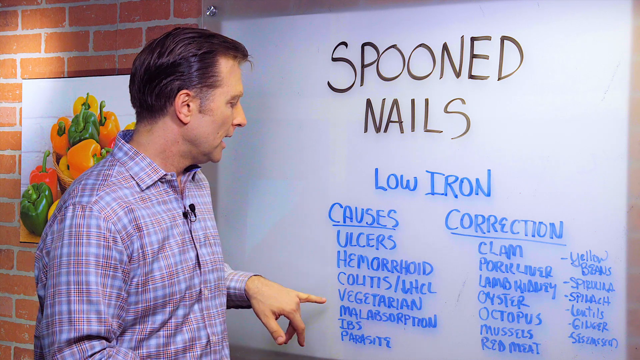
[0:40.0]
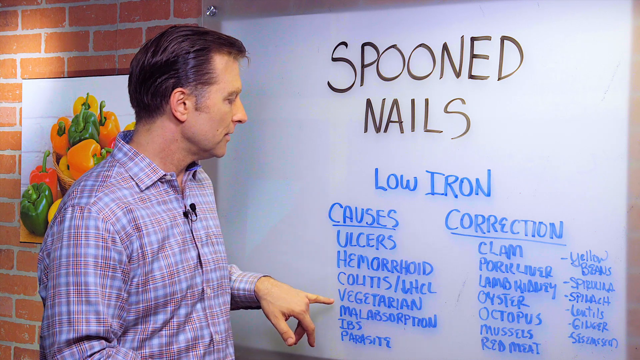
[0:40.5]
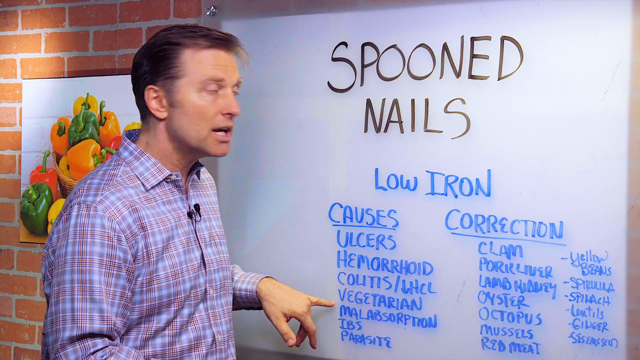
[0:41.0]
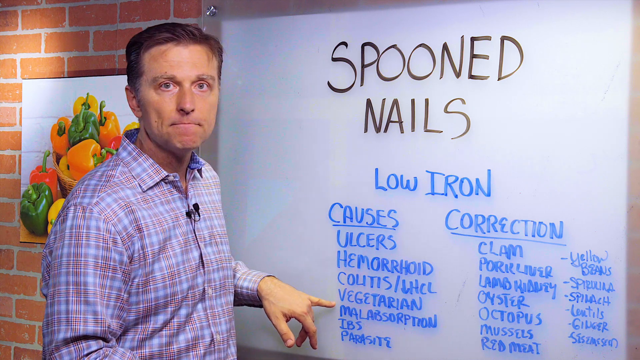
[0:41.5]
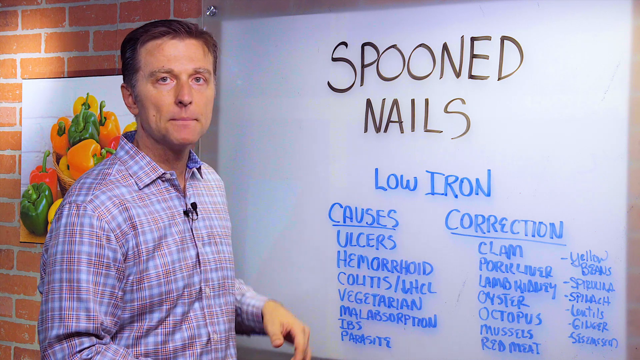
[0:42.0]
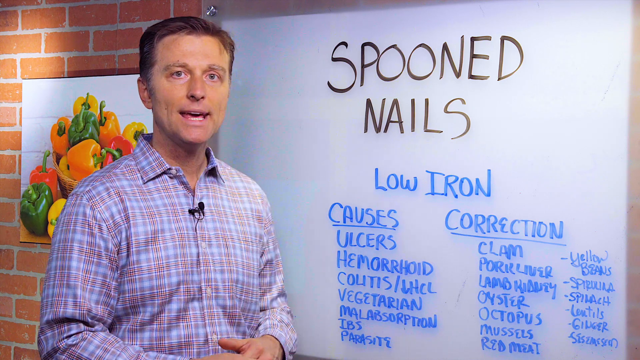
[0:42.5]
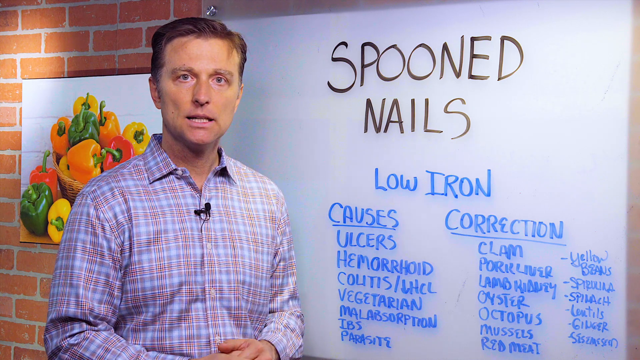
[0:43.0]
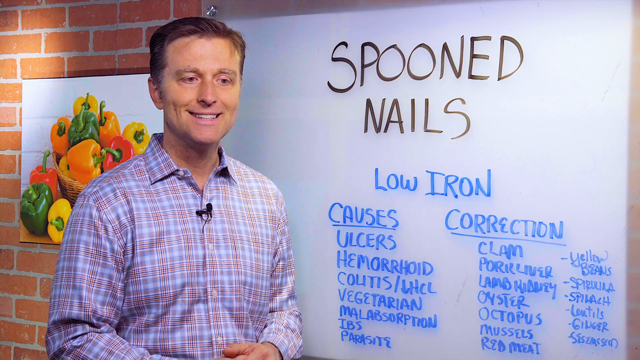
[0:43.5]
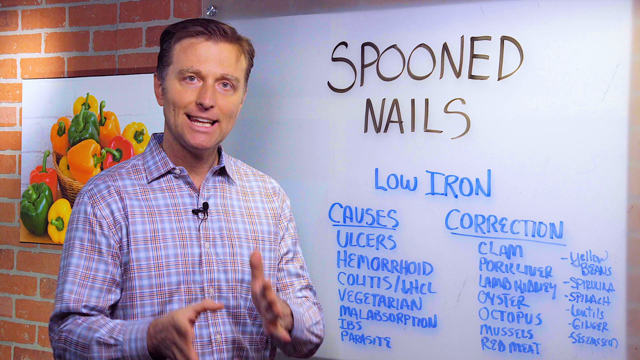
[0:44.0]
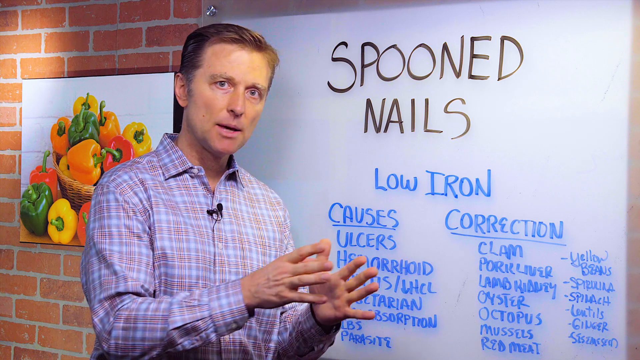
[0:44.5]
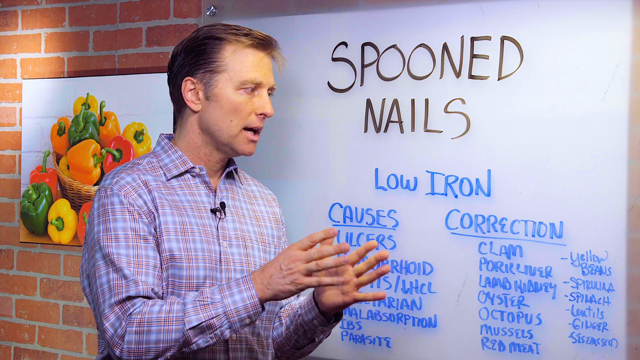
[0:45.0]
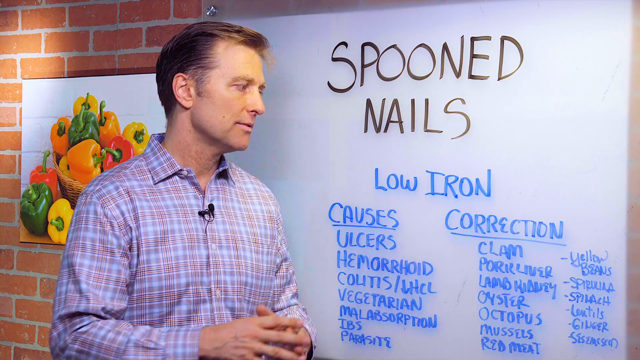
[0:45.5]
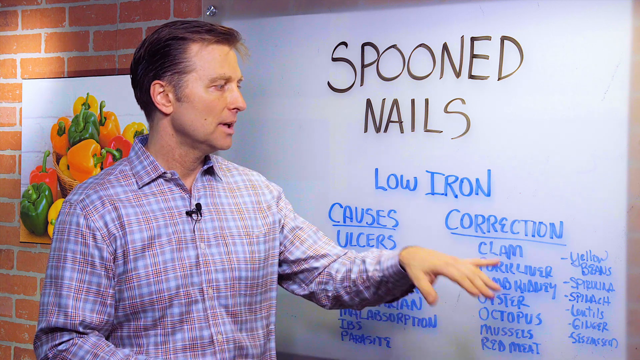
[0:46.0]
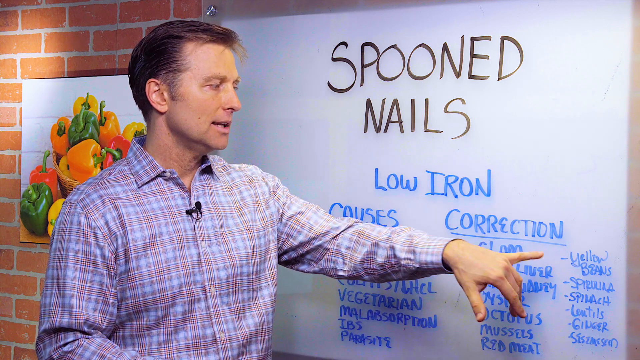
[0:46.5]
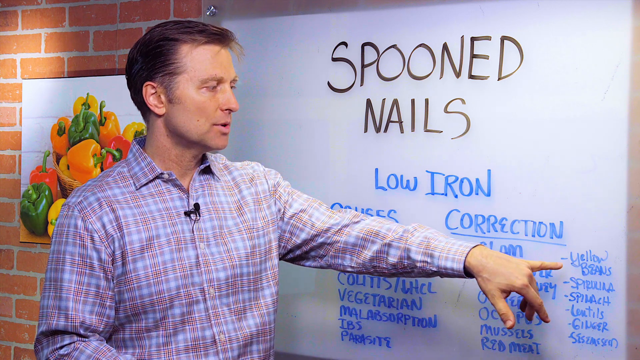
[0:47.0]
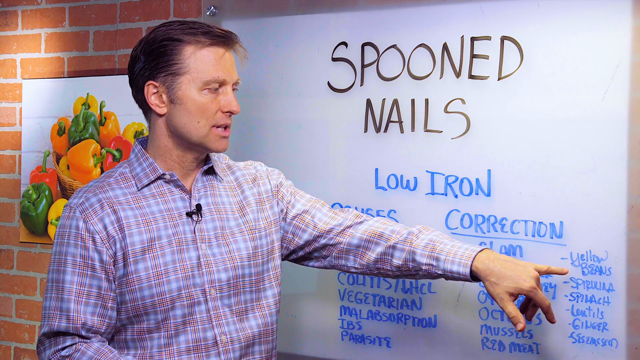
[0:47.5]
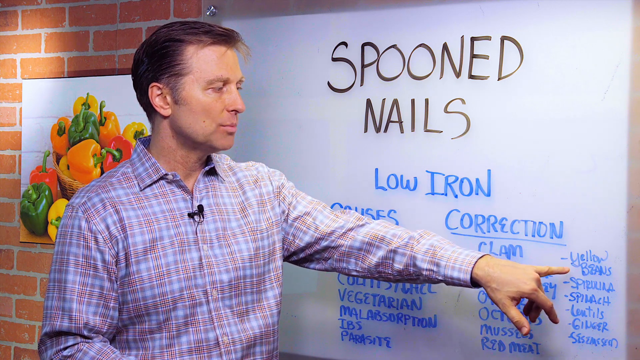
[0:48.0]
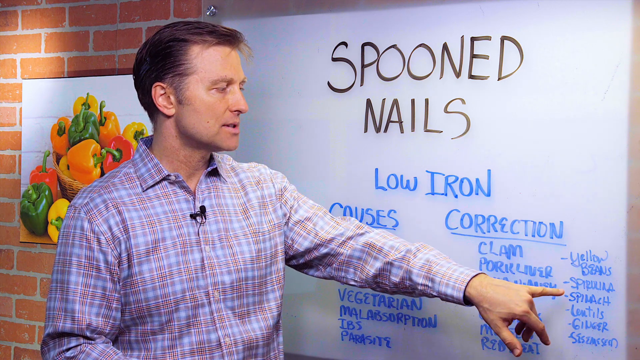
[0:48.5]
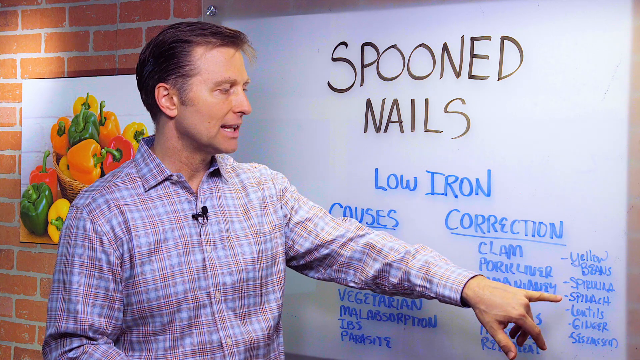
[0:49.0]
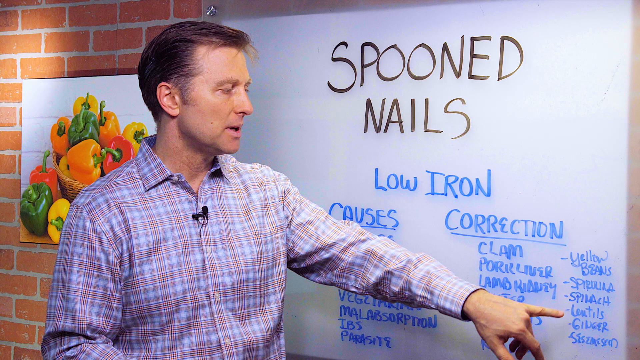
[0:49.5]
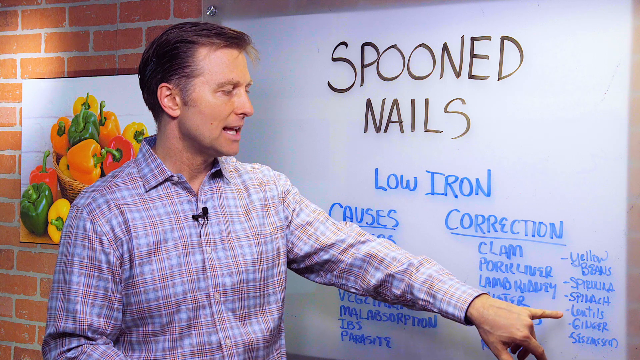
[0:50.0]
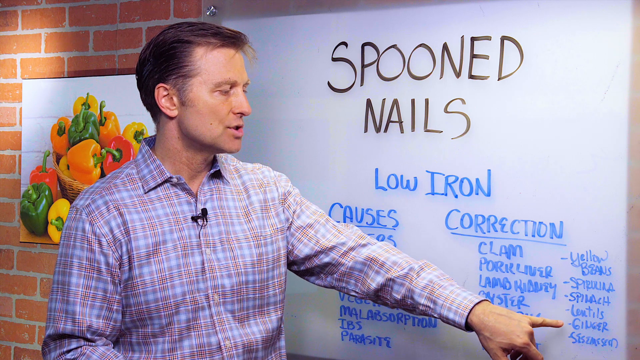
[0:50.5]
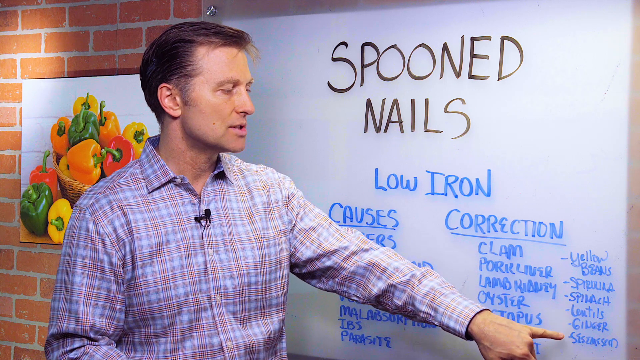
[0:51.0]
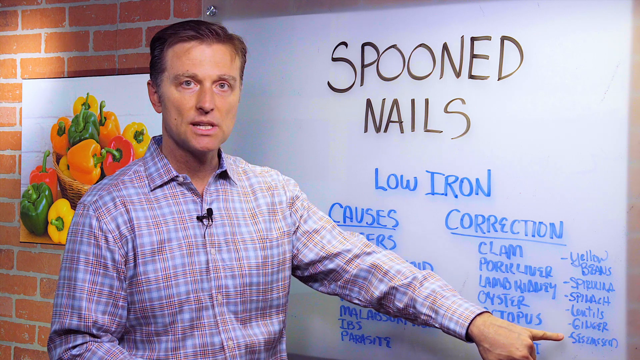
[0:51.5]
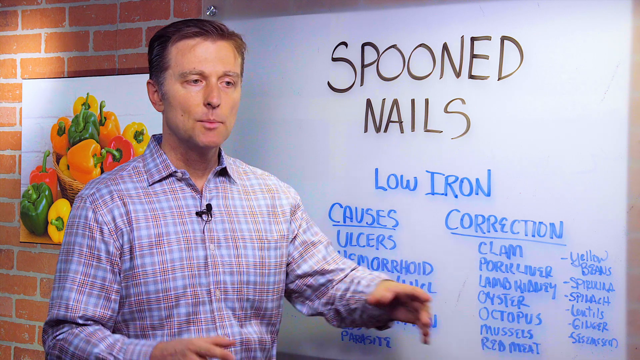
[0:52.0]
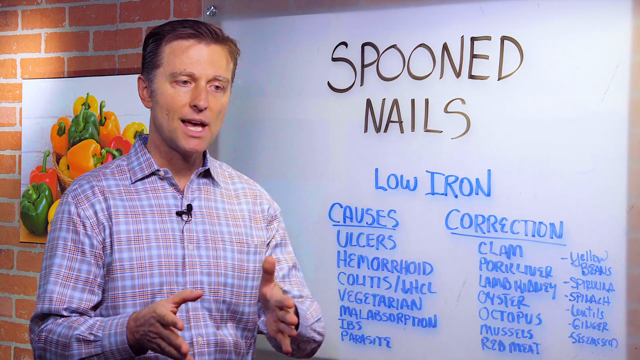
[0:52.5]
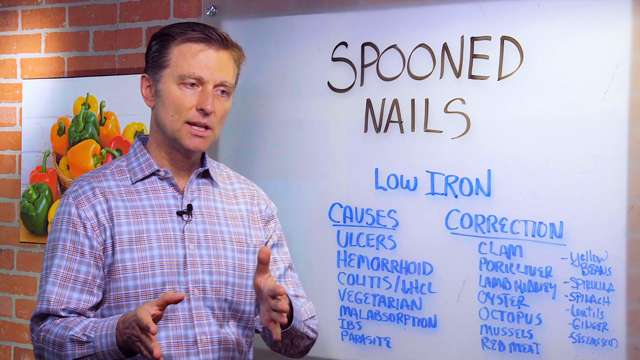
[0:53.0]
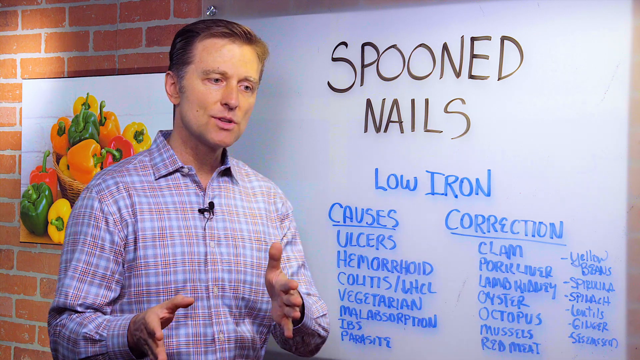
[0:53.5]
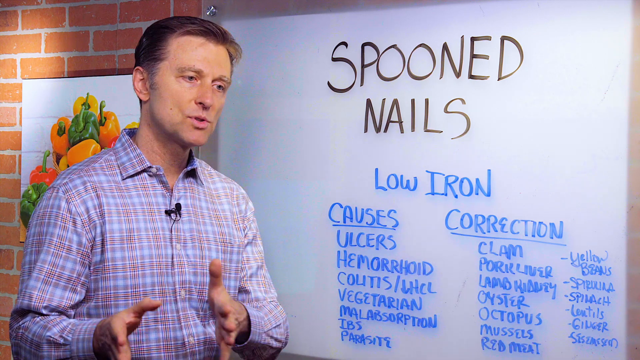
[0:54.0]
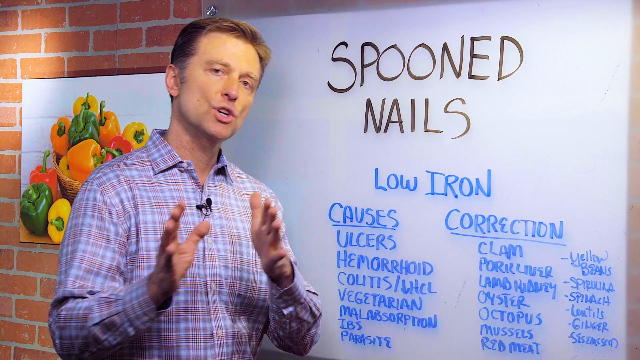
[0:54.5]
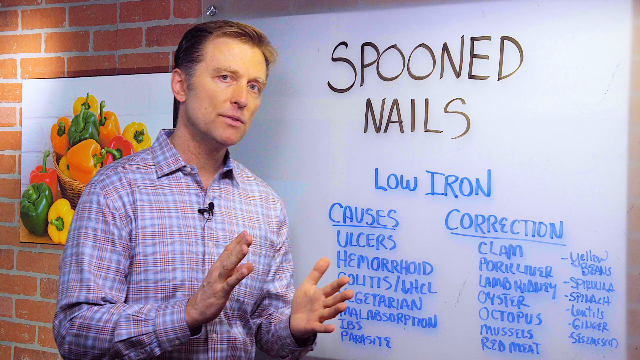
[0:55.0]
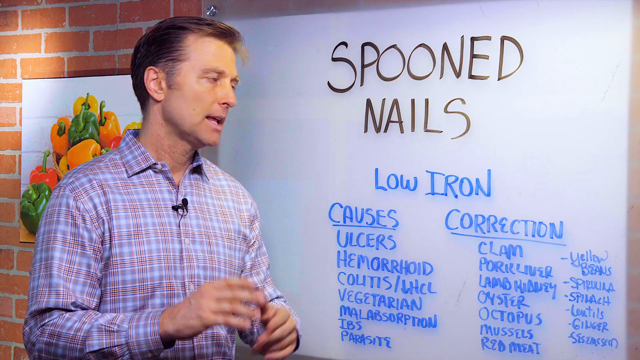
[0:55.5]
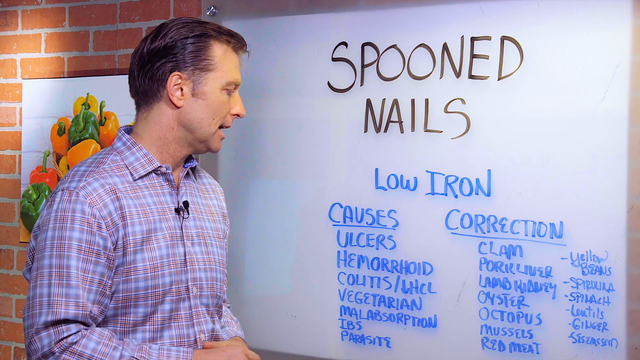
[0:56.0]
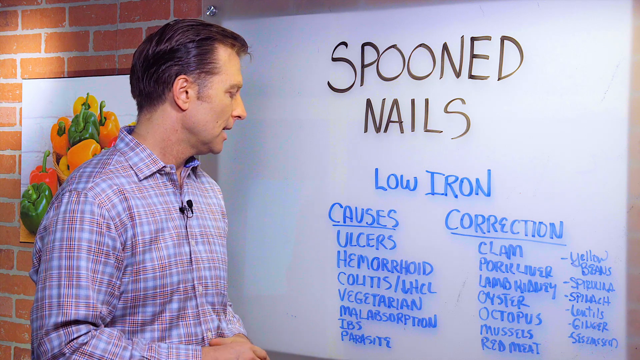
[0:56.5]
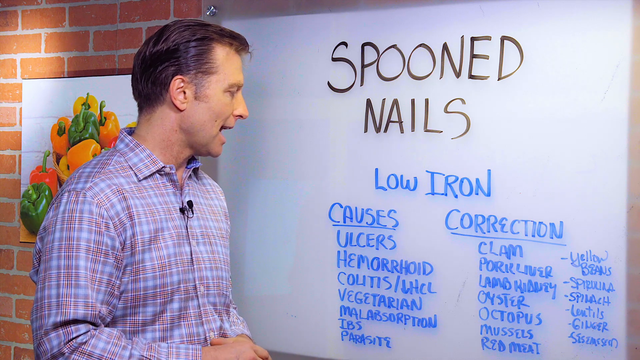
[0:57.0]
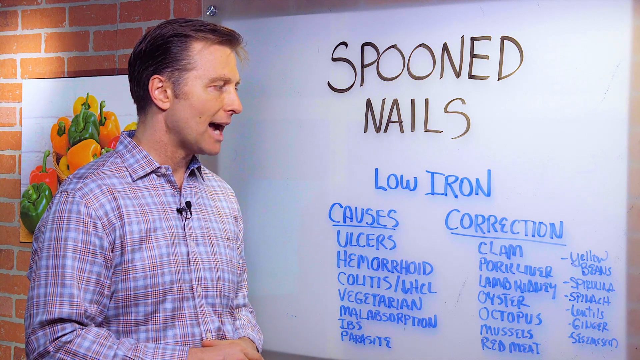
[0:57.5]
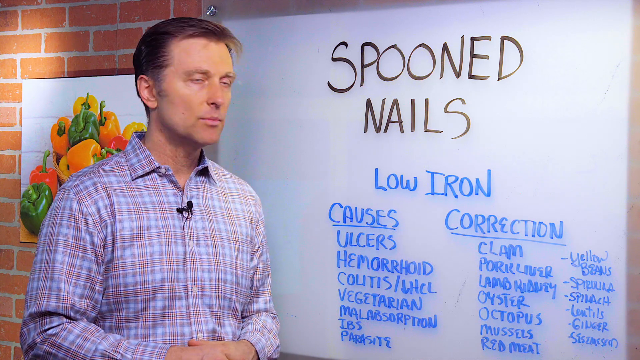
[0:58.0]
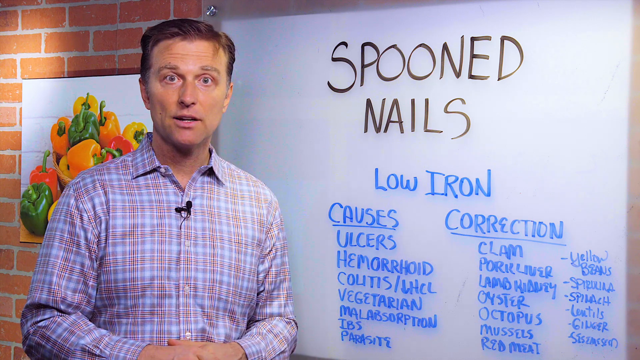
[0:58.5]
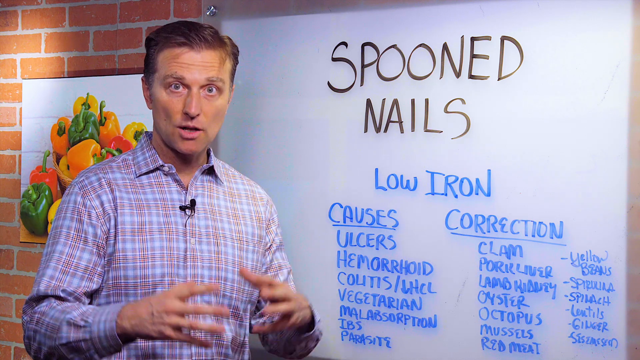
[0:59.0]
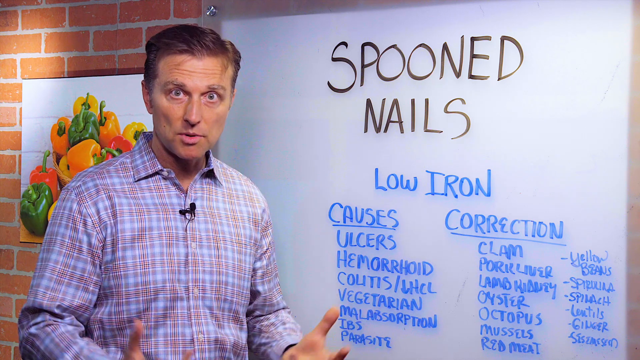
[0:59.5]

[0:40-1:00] Indoors, a man talks in front of a dry erase board, in a setting with a brick wall on which a picture of bell peppers is hung. As he talks, he refers back to the board. He stands with his left arm lifted, his hand kind of dangling, turns to the camera and speaks, then kind of lowers his left hand while continuing to talk. His head kind of bobs left and right, and there is a brief smile. He lifts his hands up, and they move sort of synchronized together, sashaying left and right, before going back down. He then lifts his left hand and uses his left pinky finger to point at the board; his body is slightly turned and his head is turned toward the board as he points at the words "yellow beans" written on it. He traces downward with his pinky, pointing at four other words, then turns back to the camera and talks to it.